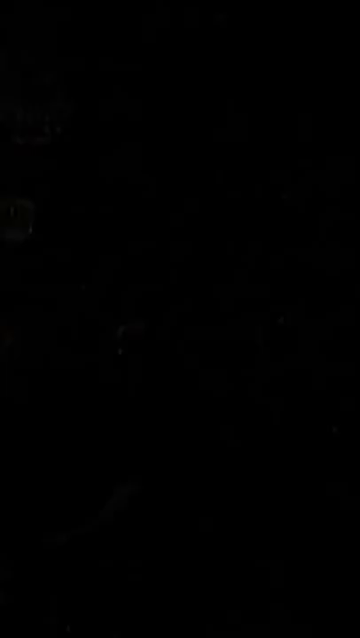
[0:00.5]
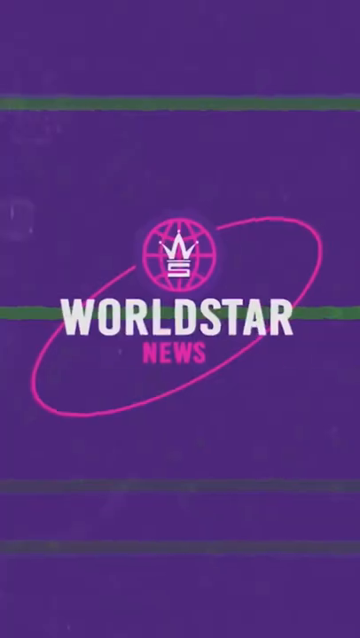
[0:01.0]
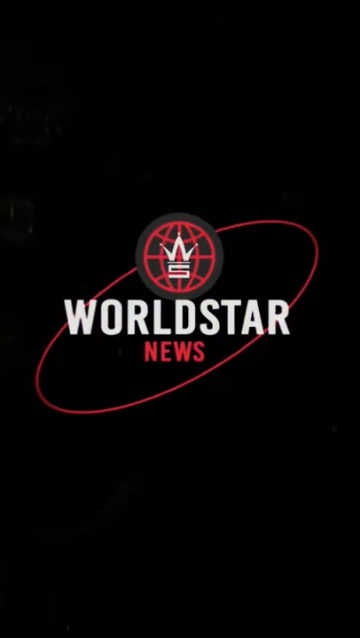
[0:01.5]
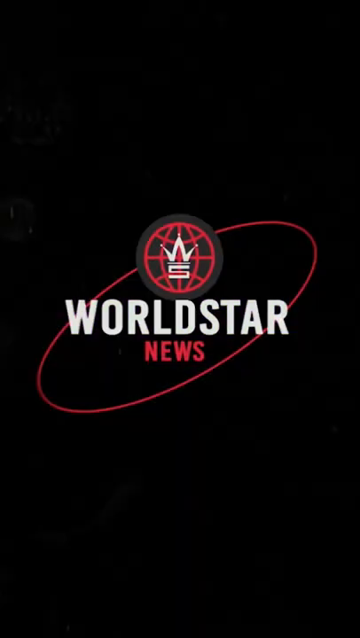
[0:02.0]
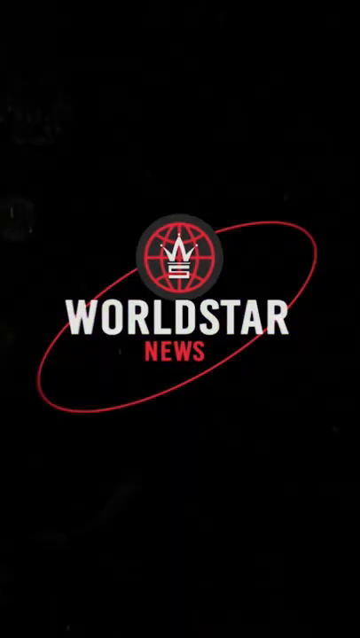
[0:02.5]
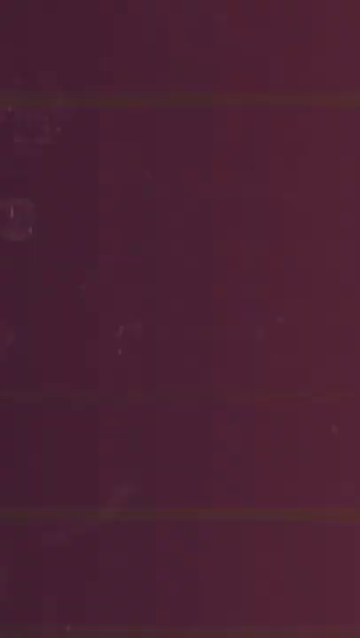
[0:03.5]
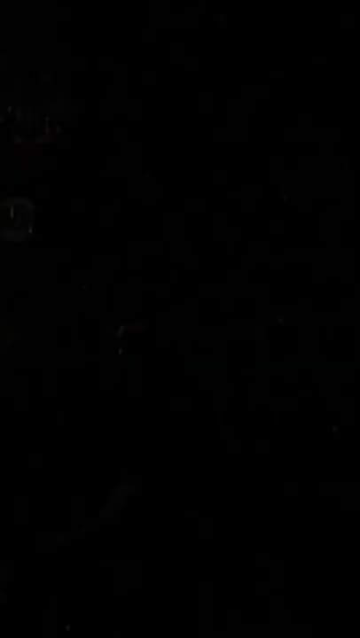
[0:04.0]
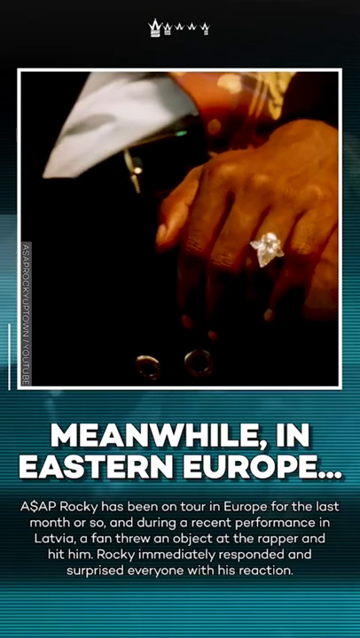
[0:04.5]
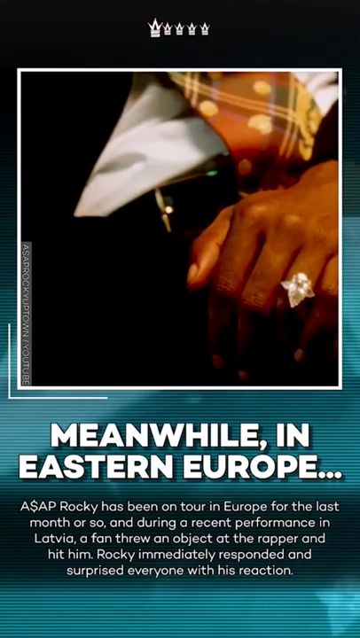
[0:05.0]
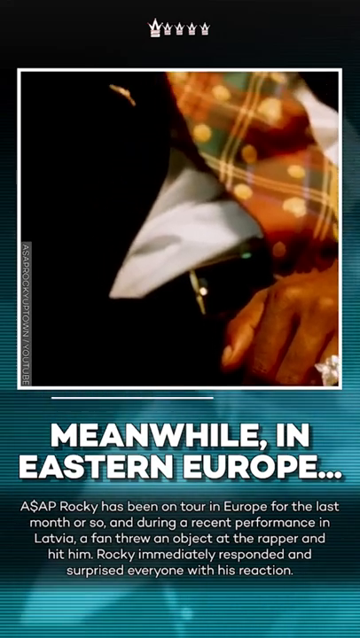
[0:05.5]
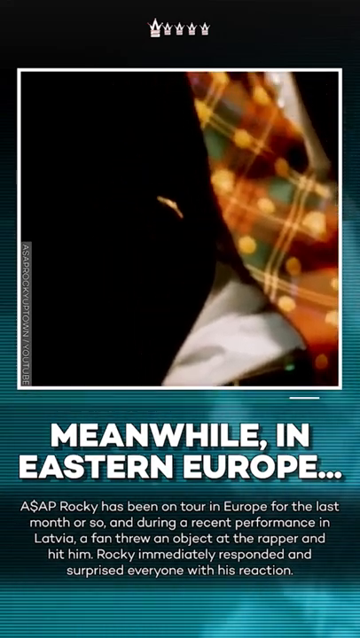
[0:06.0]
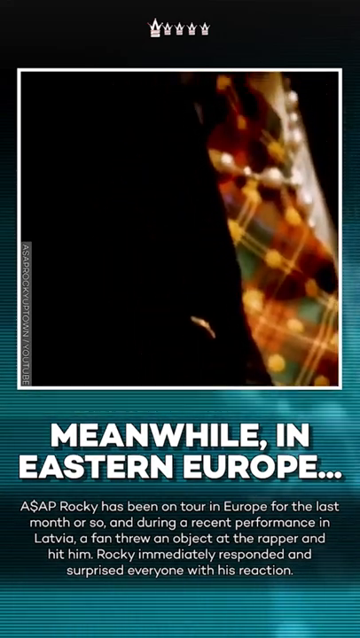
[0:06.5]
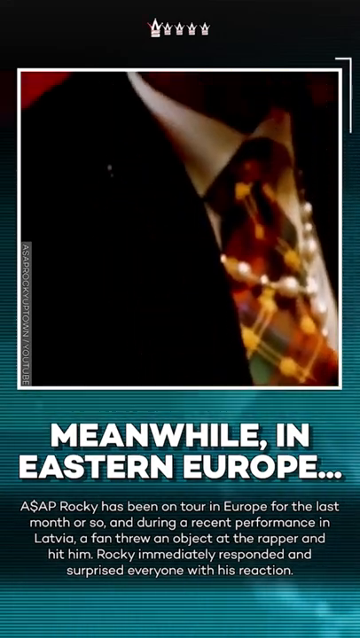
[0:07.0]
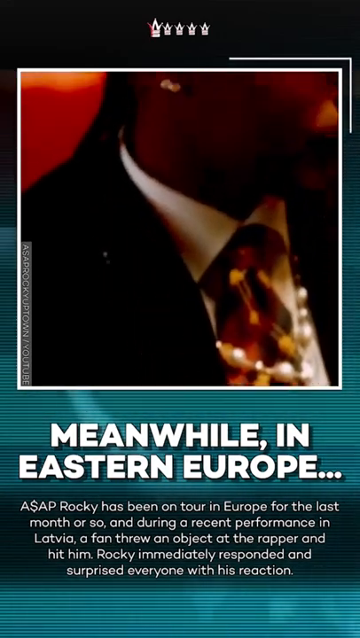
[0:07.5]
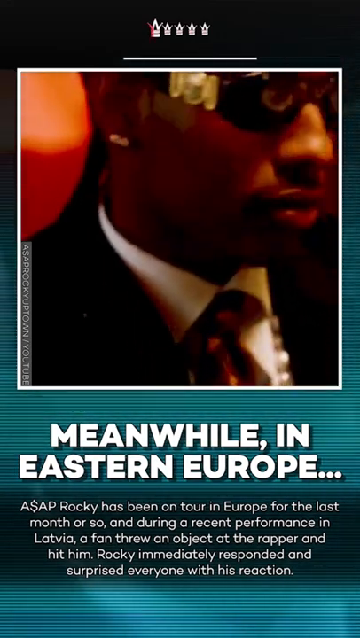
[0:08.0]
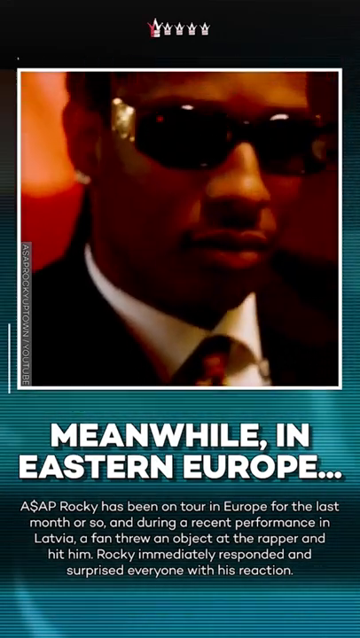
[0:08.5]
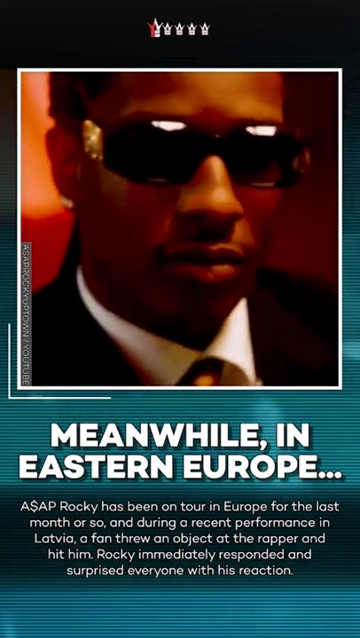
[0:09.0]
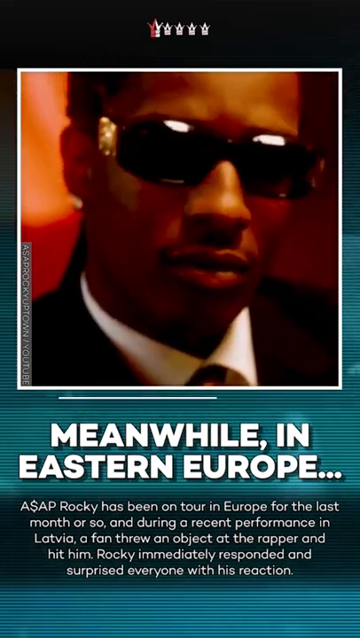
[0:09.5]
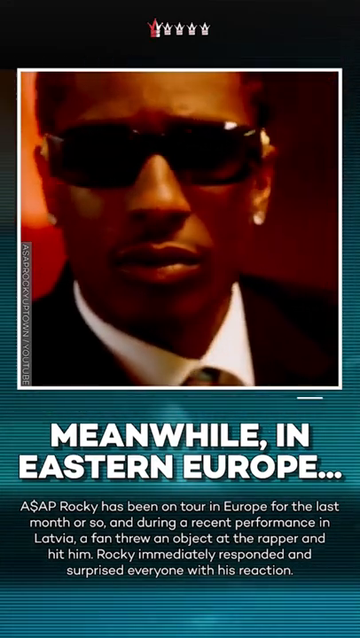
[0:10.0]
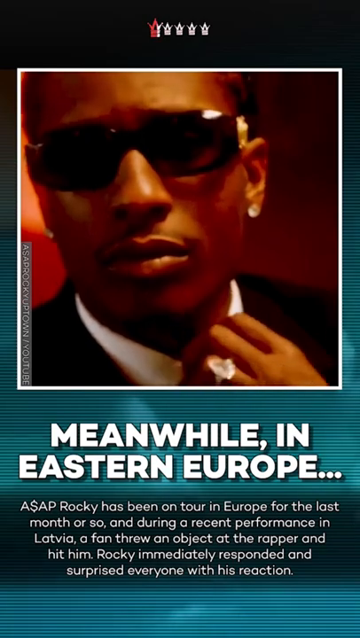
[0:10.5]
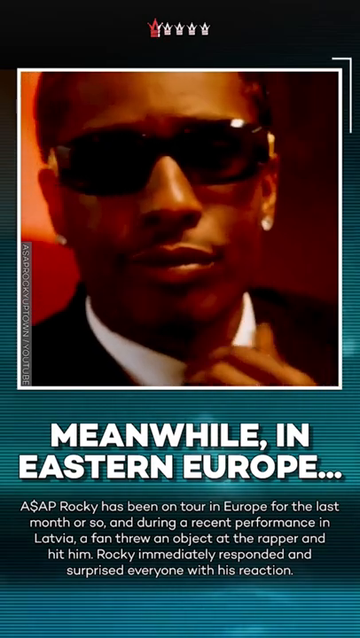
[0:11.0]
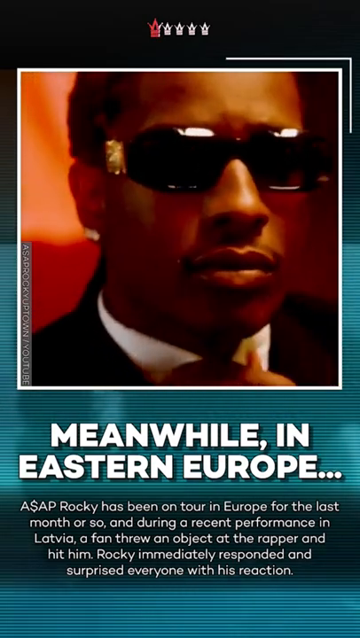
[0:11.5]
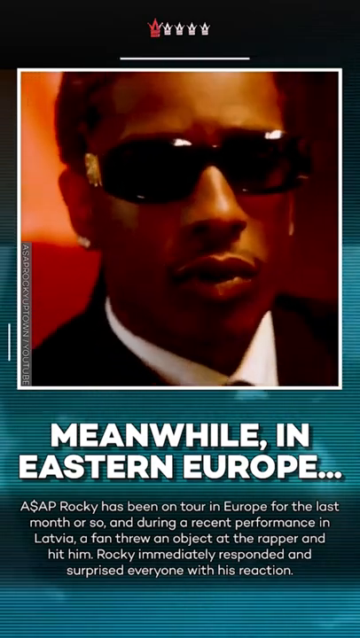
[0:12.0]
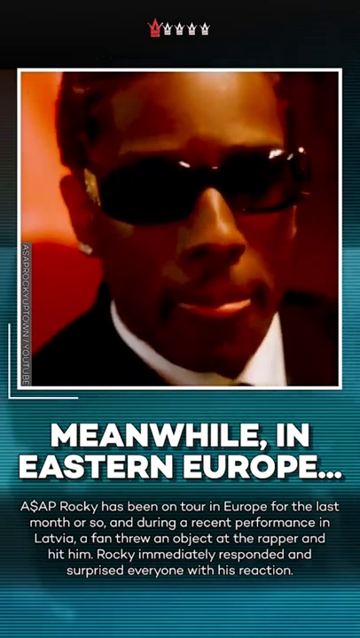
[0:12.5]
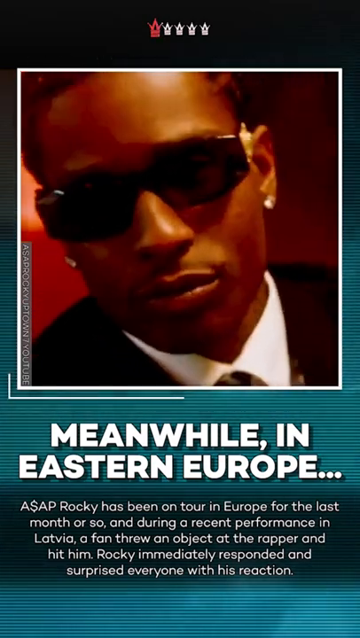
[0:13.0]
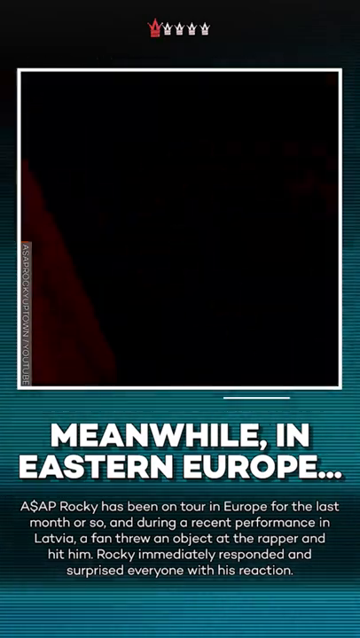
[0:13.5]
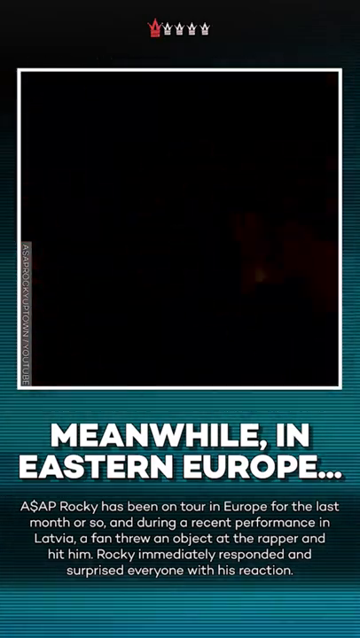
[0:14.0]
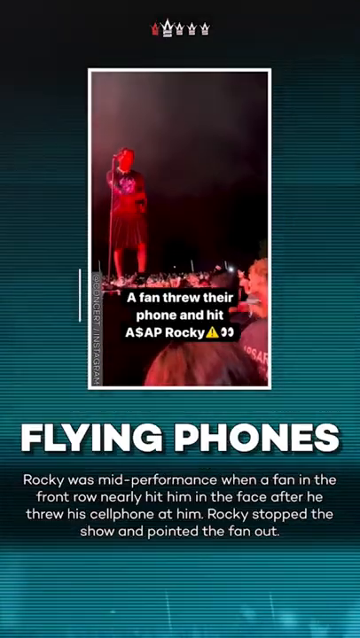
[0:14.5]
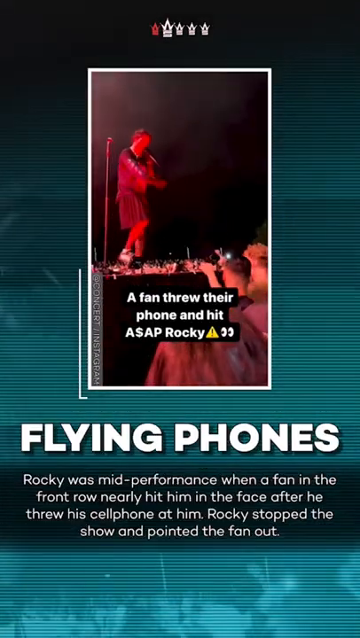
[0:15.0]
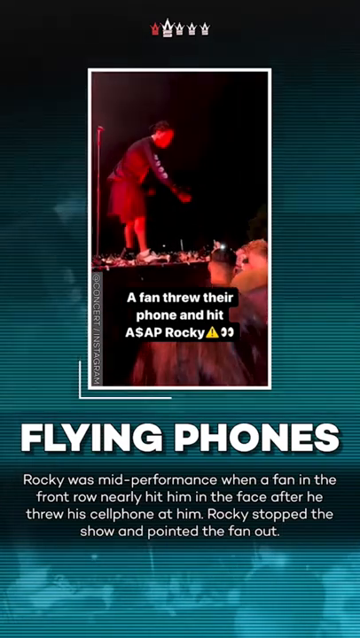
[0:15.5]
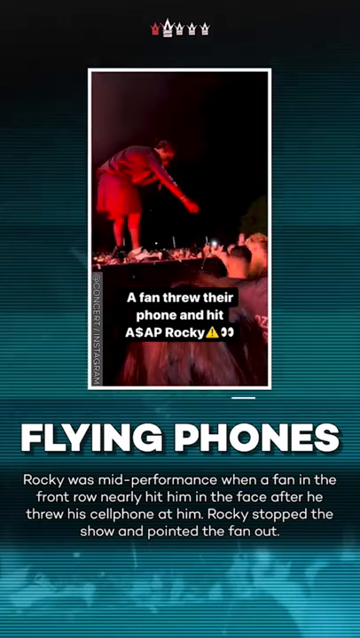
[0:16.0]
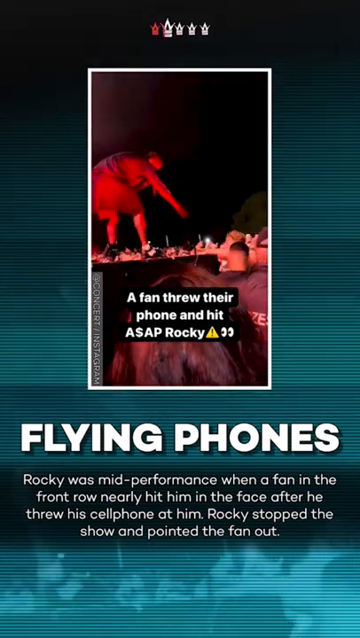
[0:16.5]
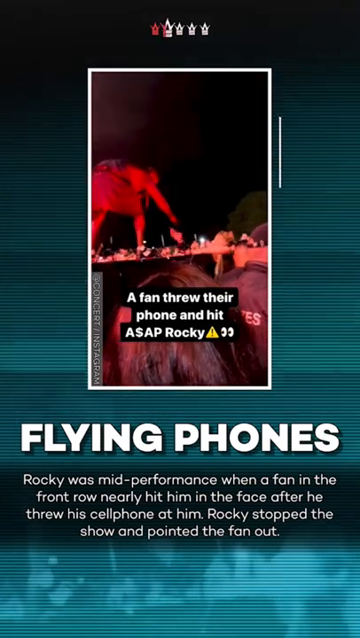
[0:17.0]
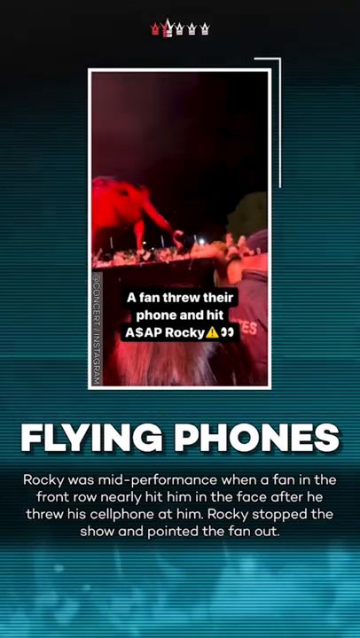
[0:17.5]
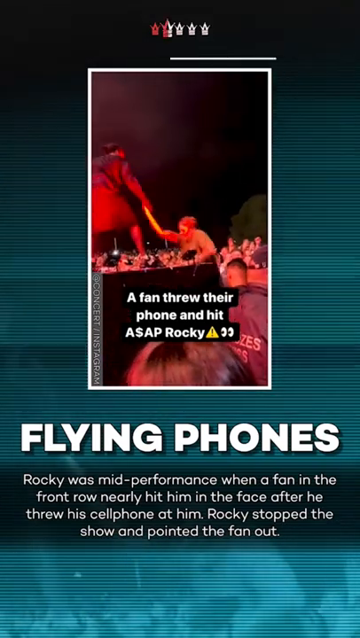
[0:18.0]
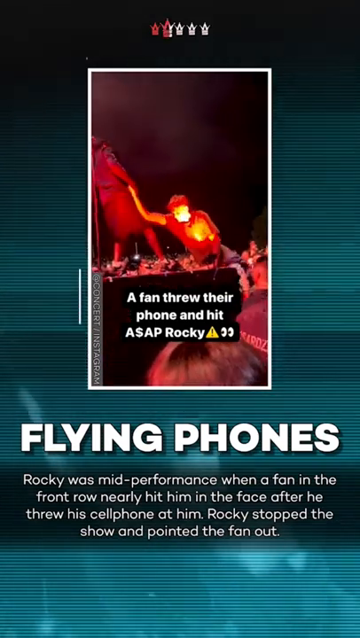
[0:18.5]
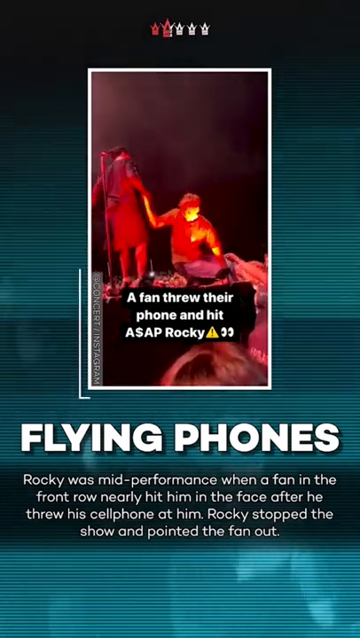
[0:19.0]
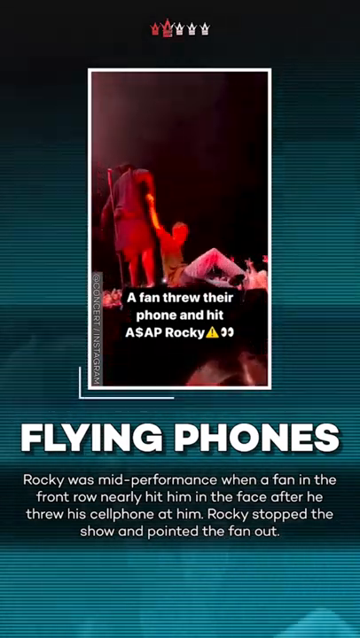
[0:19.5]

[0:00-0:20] The video, from World Star News, shows an article about A$AP Rocky along with a picture of him wearing shades and a suit. The article is titled "Meanwhile in Eastern Europe" and states that A$AP Rocky has been on tour for the last month and got into some legal trouble with a fan during his visit there. The article mentions flying phones: while Rocky was mid-performance at a concert on the tour, in Latvia, a fan threw a cell phone at him that nearly hit him in the face.